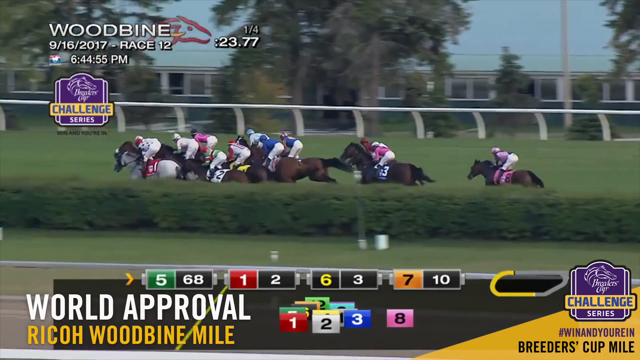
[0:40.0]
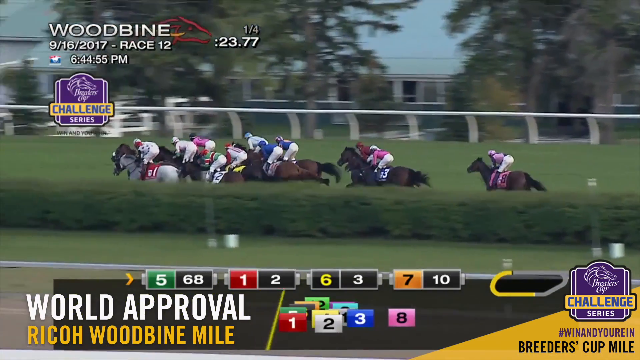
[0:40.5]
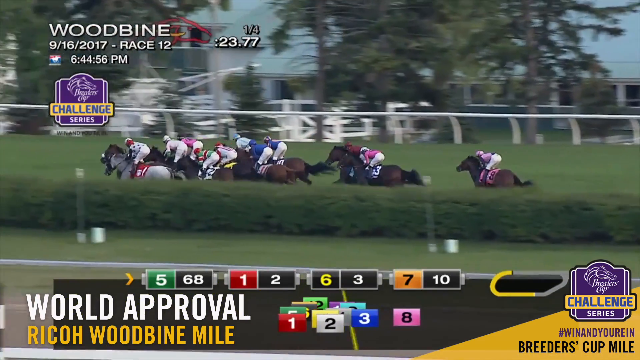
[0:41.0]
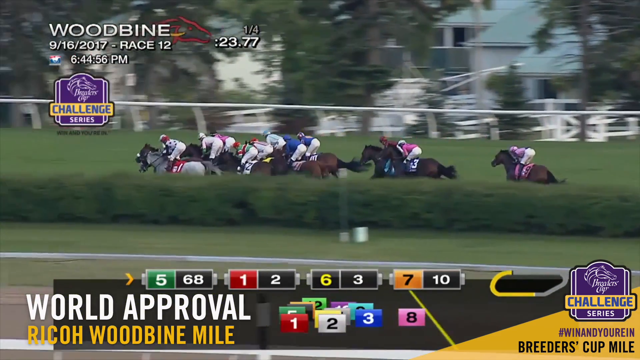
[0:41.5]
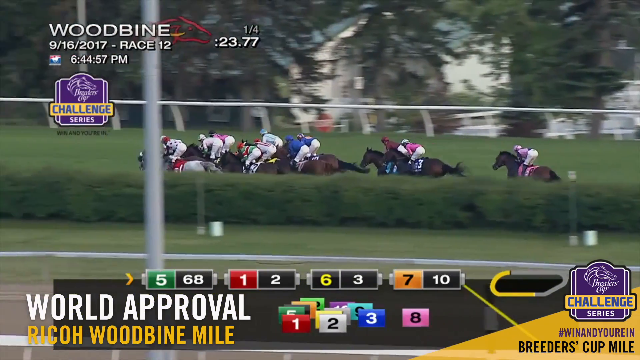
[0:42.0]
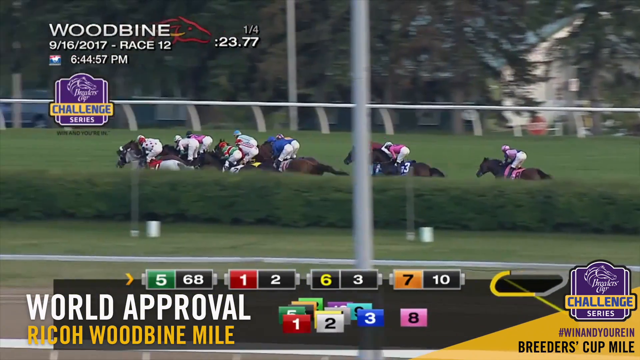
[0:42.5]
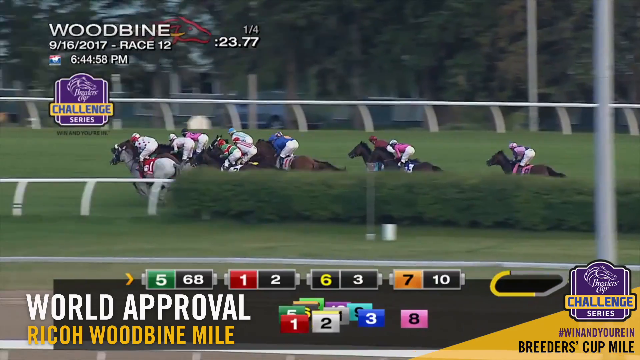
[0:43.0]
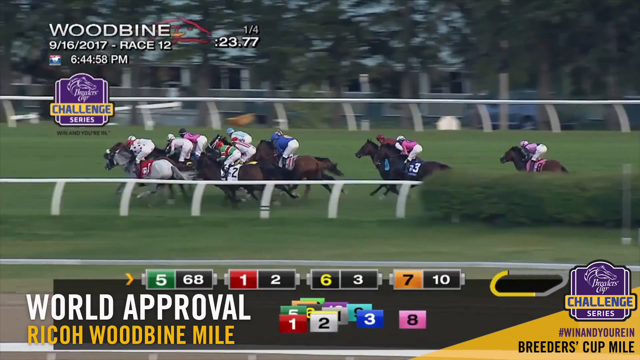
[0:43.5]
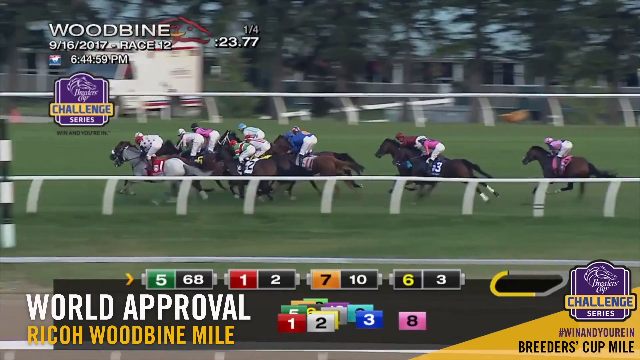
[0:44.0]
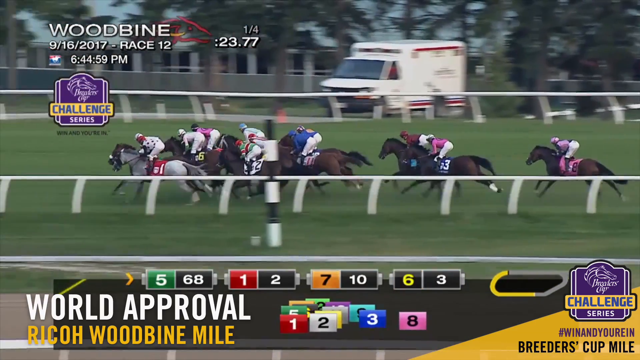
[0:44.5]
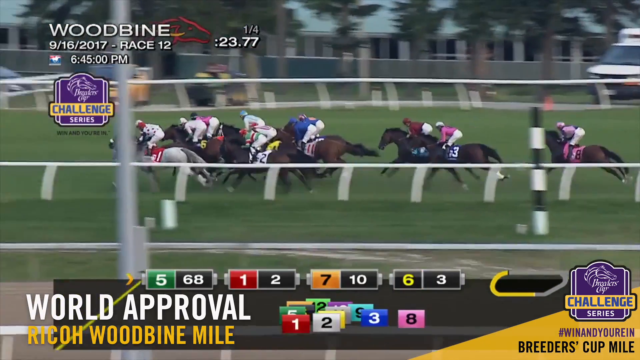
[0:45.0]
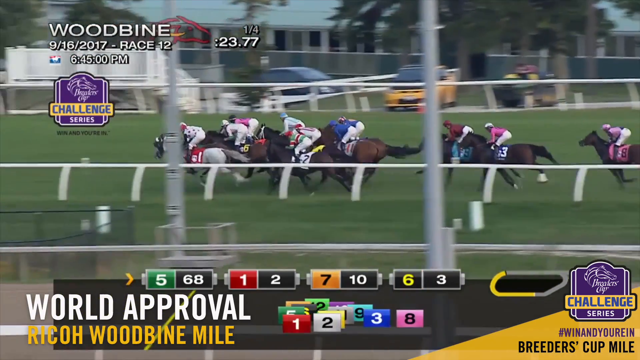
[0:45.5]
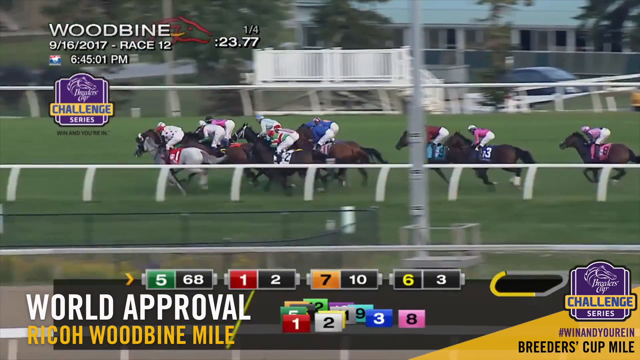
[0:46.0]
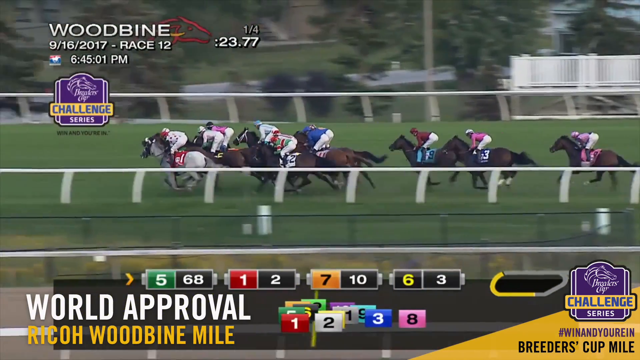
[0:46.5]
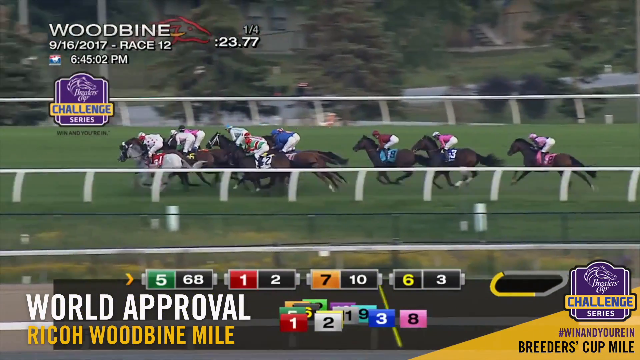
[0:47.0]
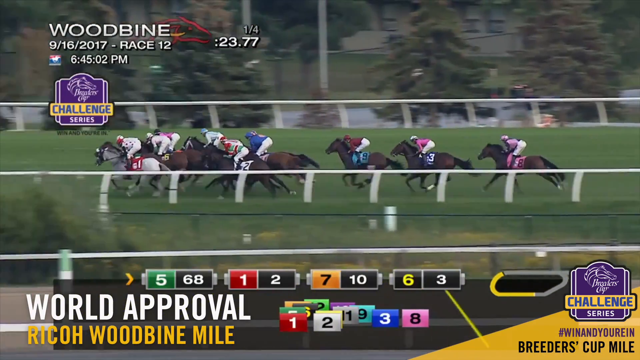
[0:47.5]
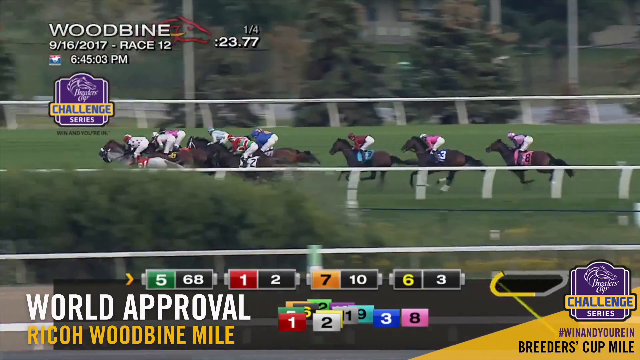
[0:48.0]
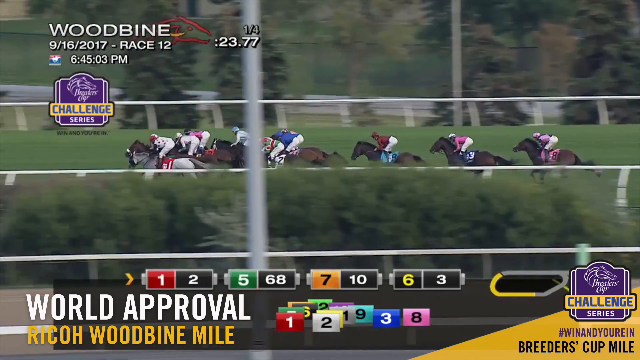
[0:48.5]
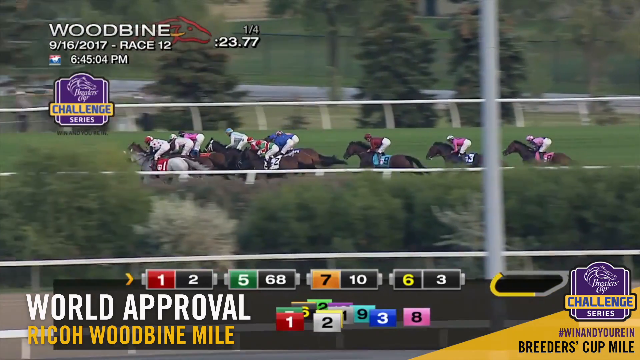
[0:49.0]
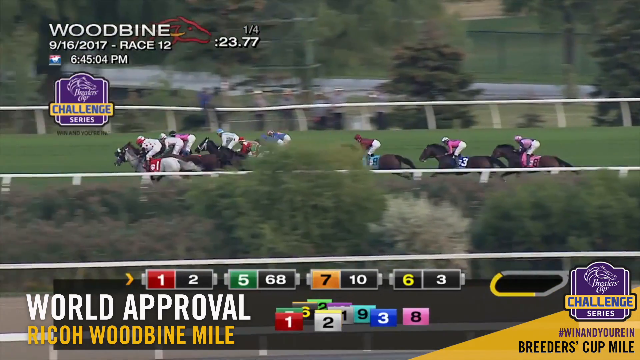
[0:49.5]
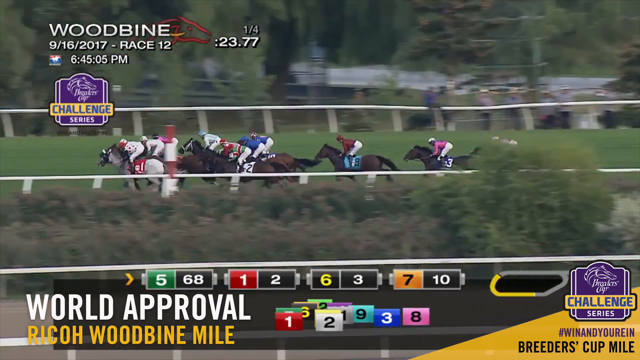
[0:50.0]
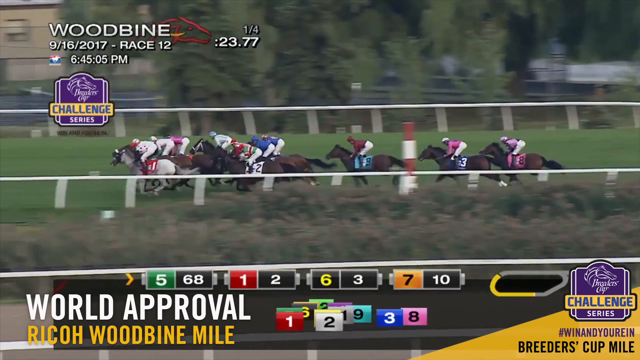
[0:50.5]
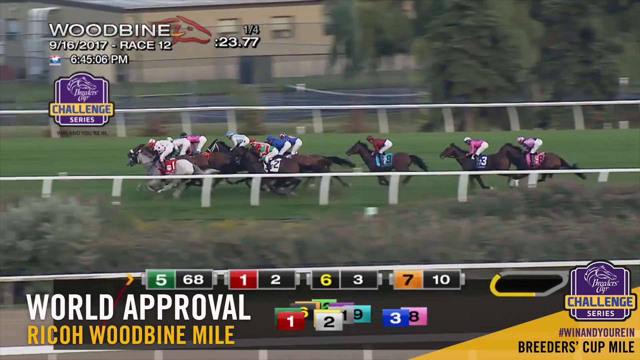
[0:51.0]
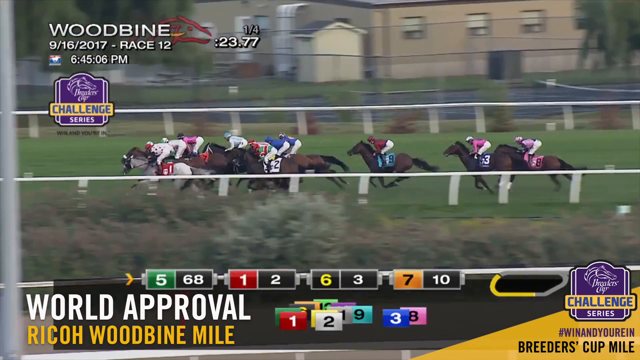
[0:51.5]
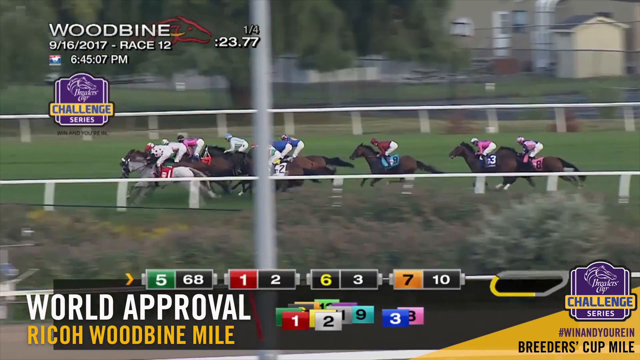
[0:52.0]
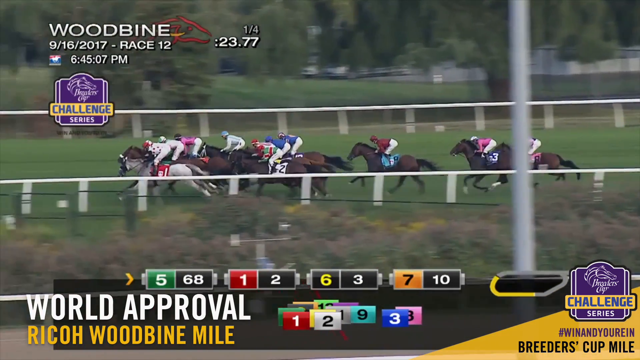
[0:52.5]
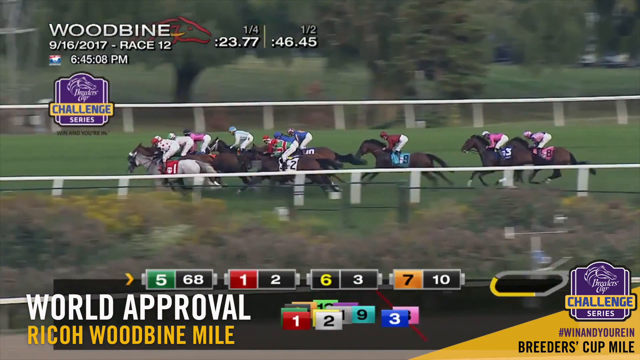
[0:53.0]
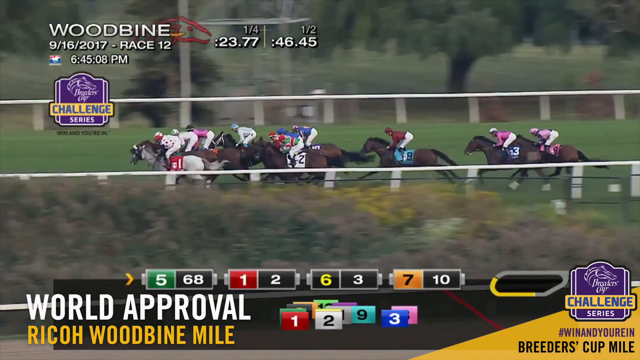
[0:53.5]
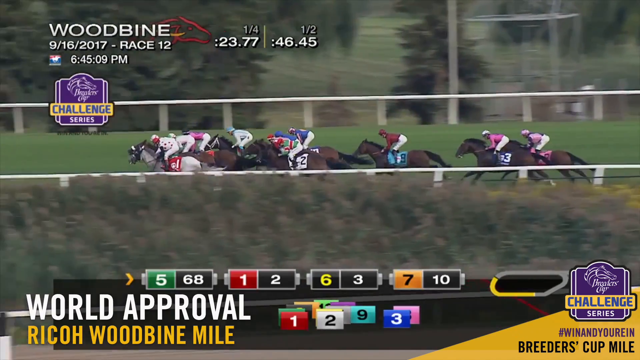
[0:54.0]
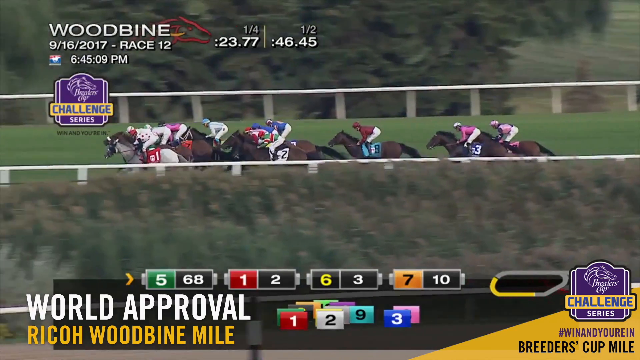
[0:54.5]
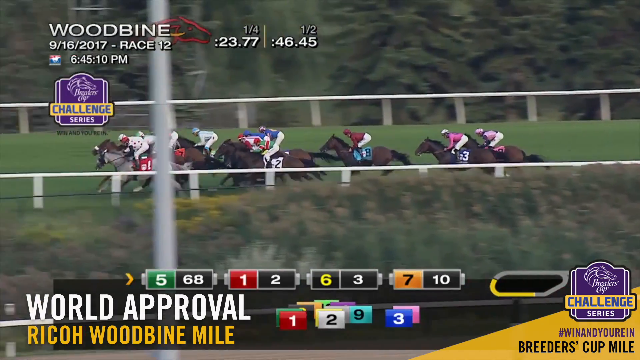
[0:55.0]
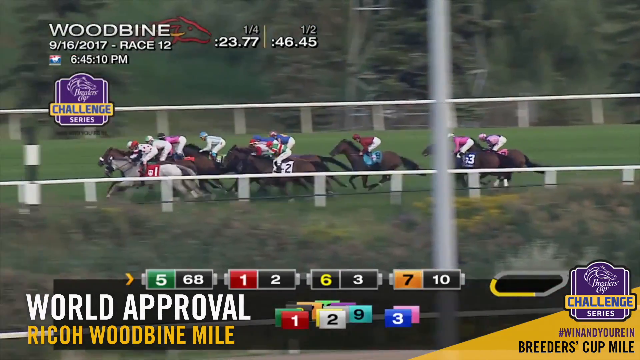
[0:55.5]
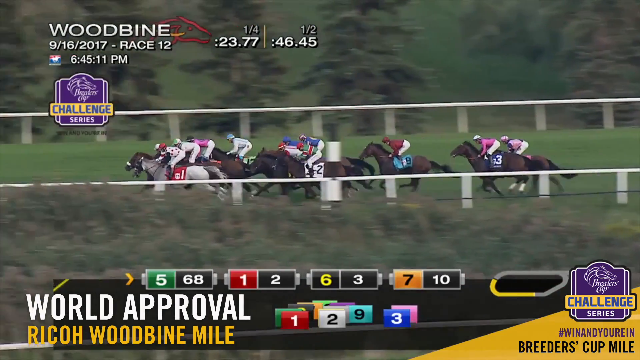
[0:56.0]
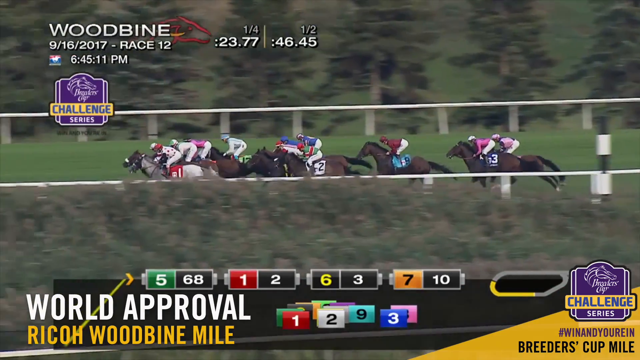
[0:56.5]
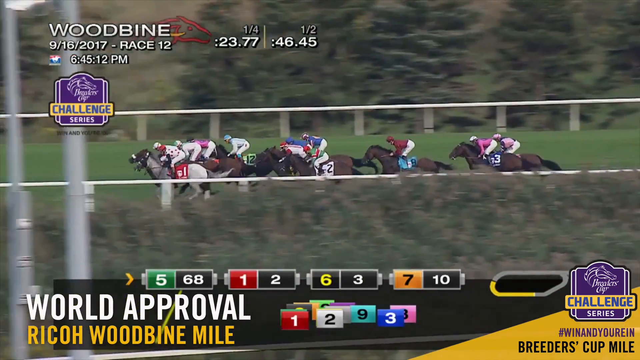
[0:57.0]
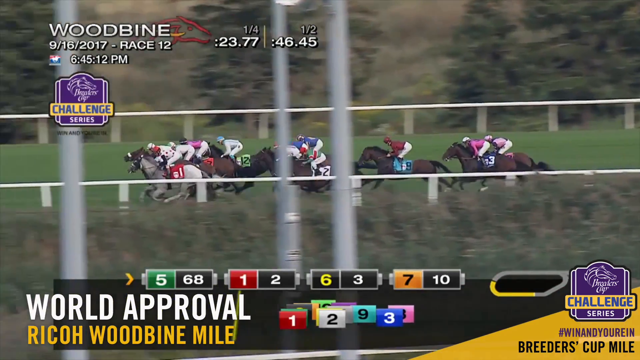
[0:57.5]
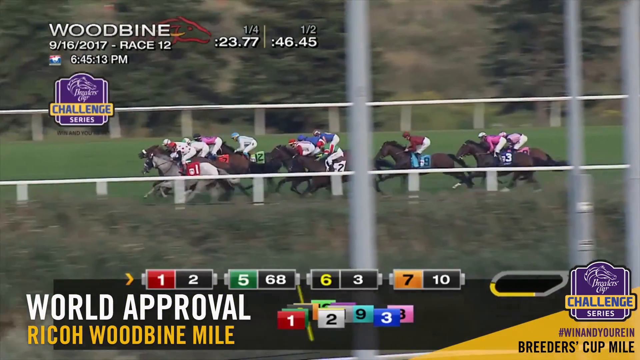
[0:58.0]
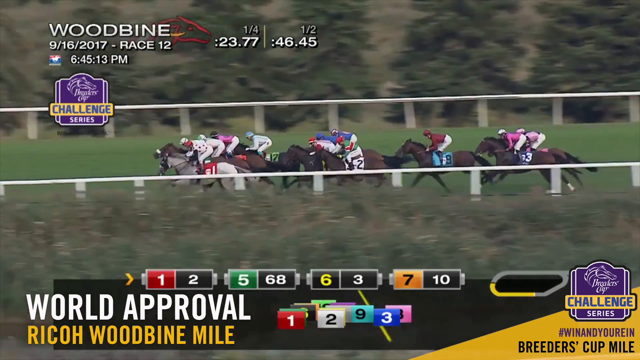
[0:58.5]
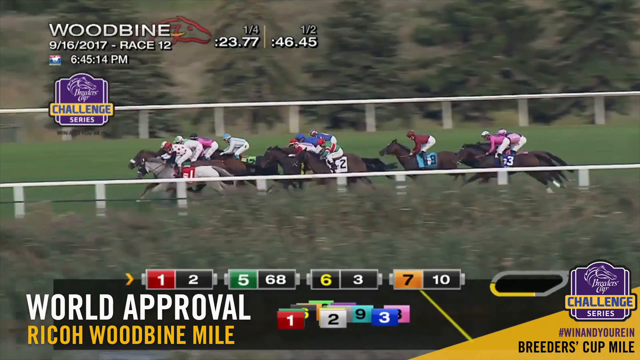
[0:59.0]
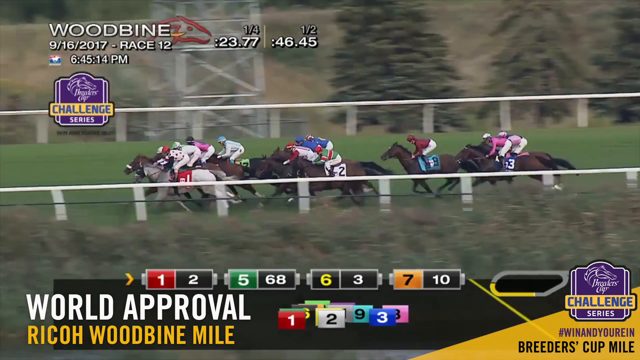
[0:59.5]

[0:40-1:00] All 12 horses and jockeys continue racing anti-clockwise from the right side of the screen to the left. Number eight is still in last place, although it appears to be catching up with number three. Number five and number one appear to be the front runners, and from the bottom of the screen and the horses themselves it seems to be a very close race between them. As they go, more of the background outside the racecourse comes into view: many trees, and what appears to be some grass, woodland and a car park. On the inside are the white railings, with various bushes and shrubs on the inner side of the course. The rider of number one appears to wear a spotted jersey, white with spots that could be black or red. The horses are all going very fast. Text at the top shows that this is race 12 and the Rico Woodbine Mile.